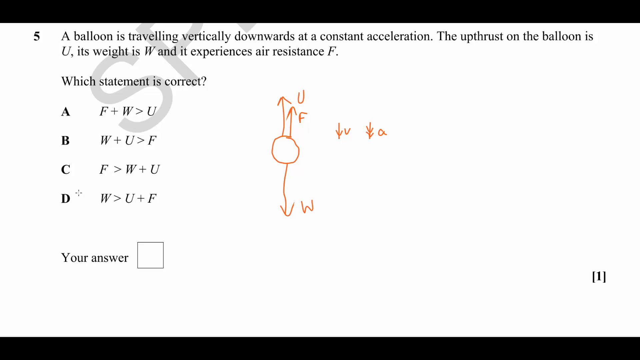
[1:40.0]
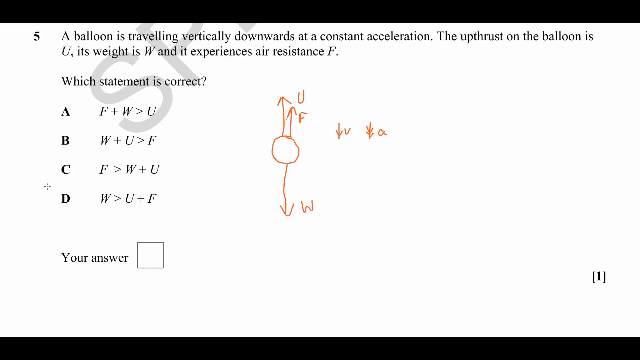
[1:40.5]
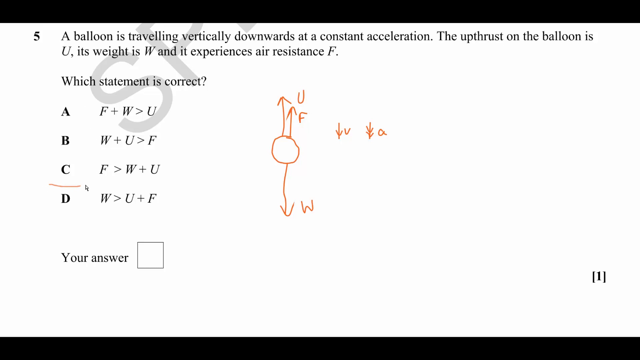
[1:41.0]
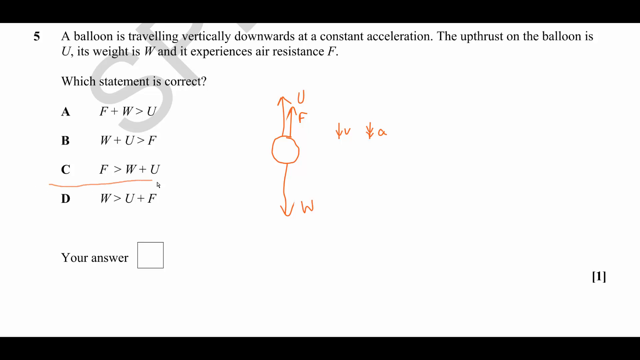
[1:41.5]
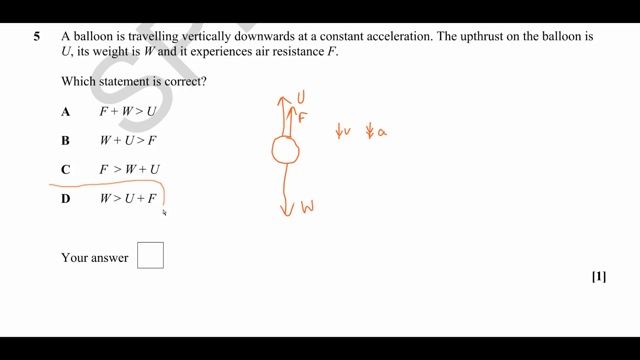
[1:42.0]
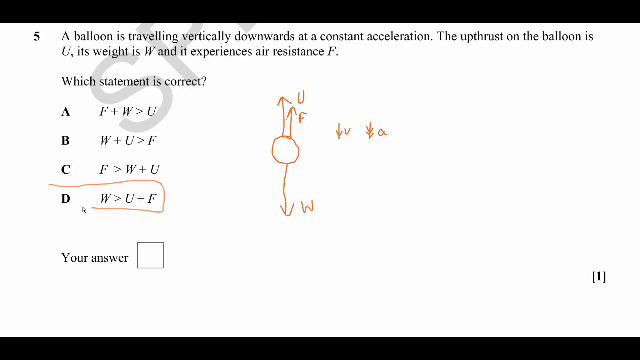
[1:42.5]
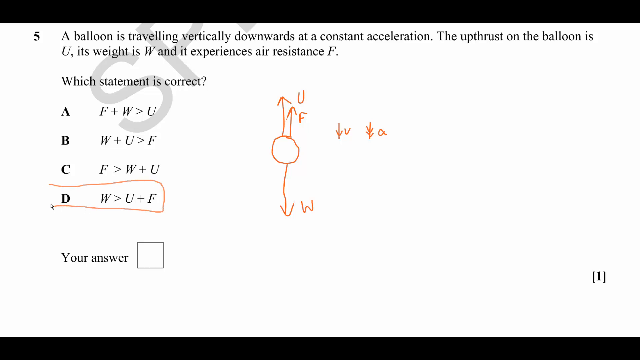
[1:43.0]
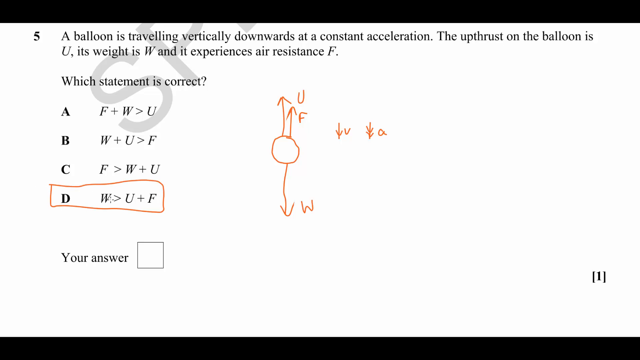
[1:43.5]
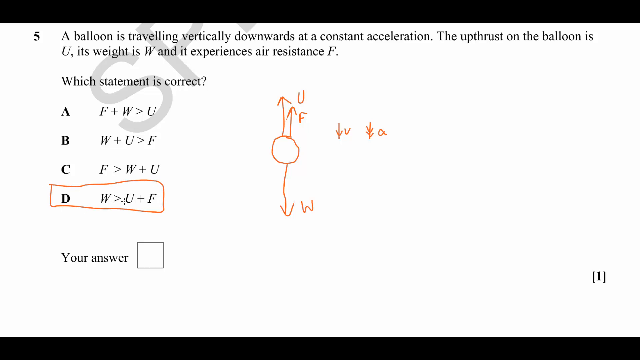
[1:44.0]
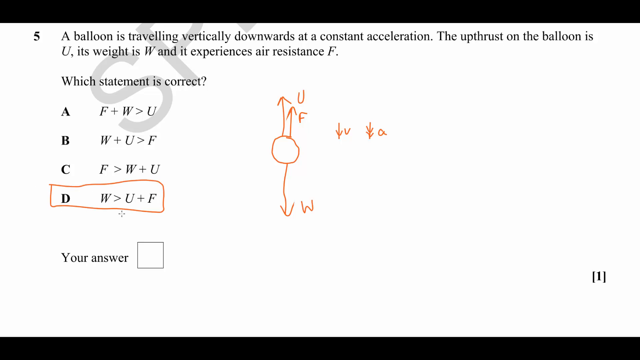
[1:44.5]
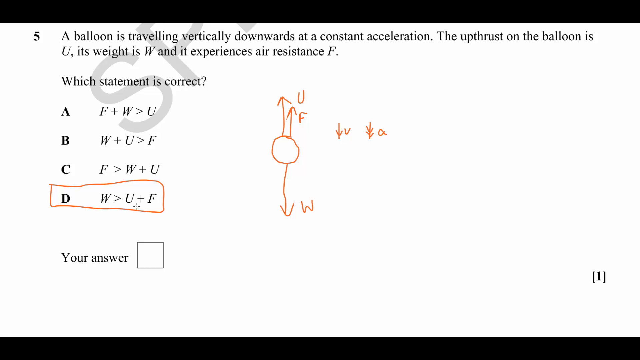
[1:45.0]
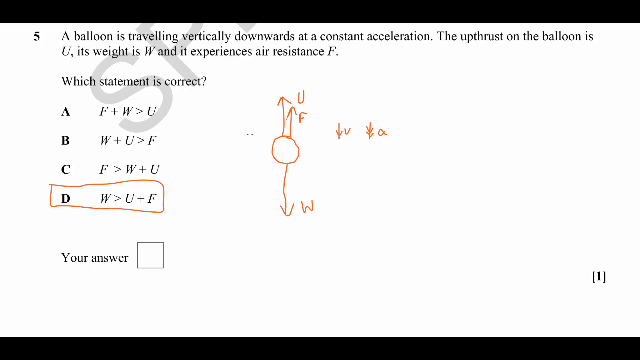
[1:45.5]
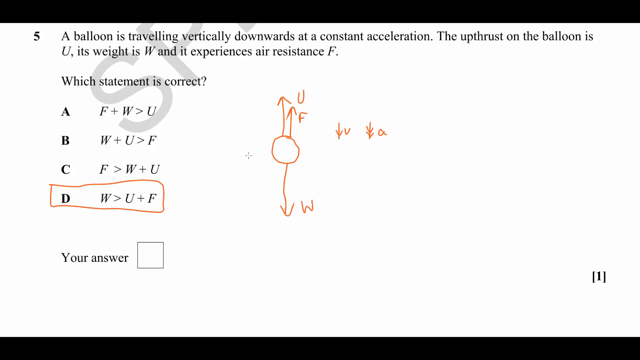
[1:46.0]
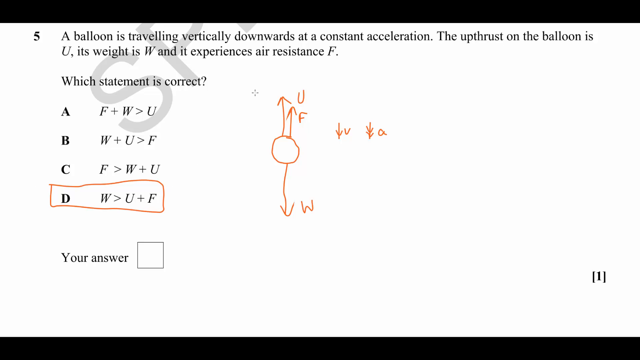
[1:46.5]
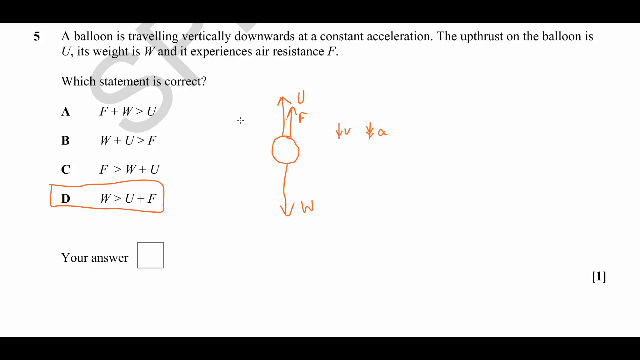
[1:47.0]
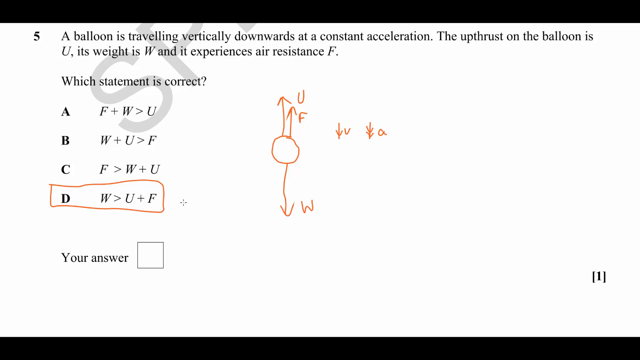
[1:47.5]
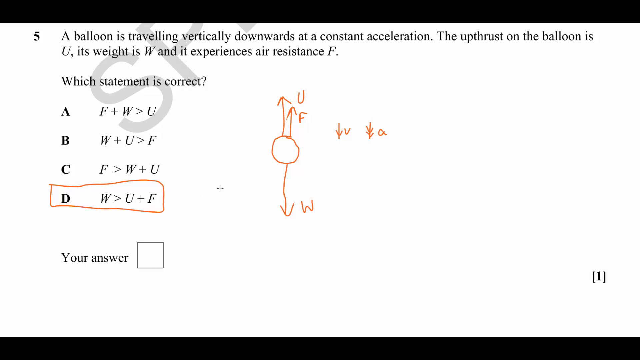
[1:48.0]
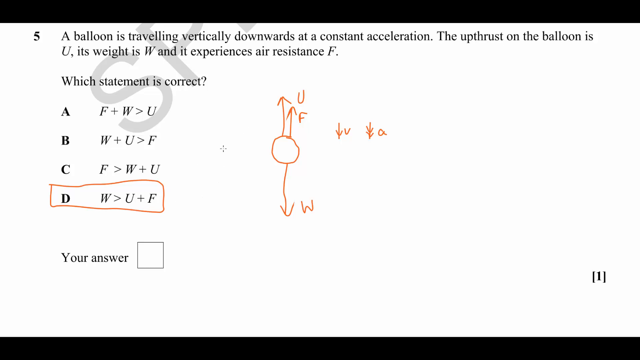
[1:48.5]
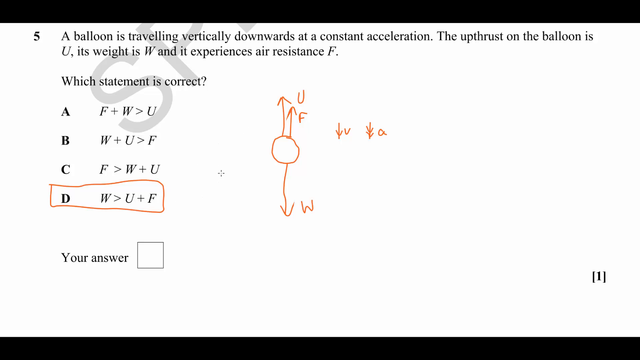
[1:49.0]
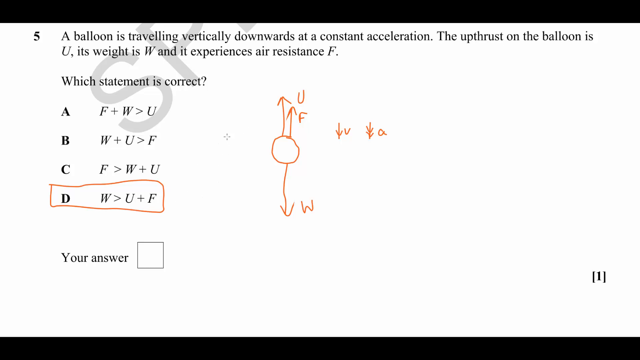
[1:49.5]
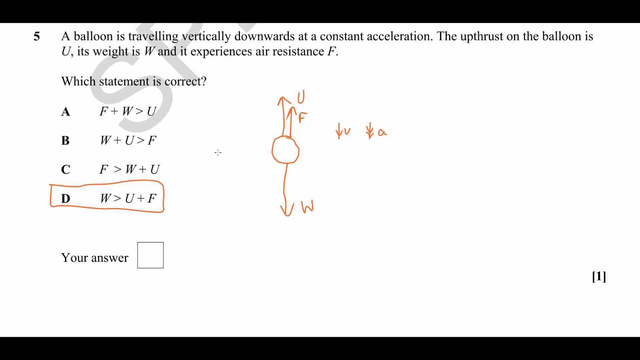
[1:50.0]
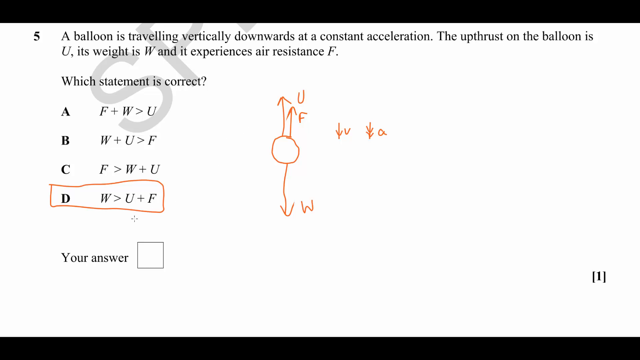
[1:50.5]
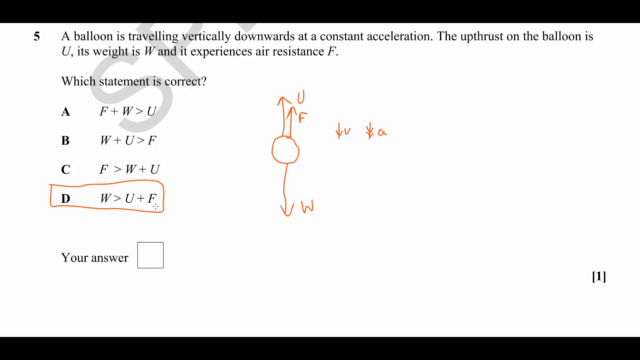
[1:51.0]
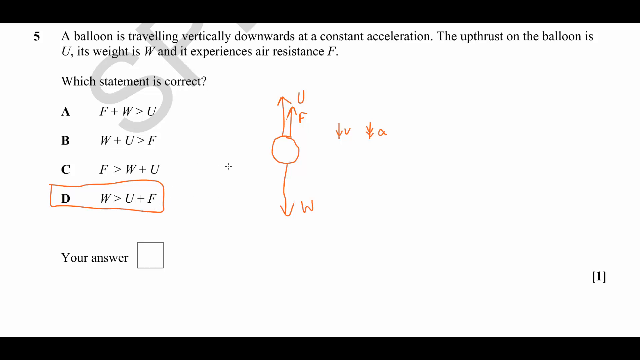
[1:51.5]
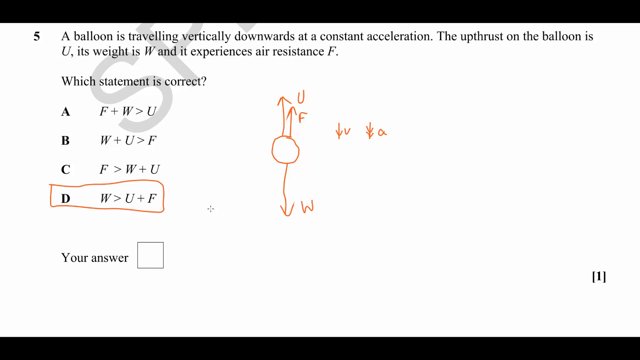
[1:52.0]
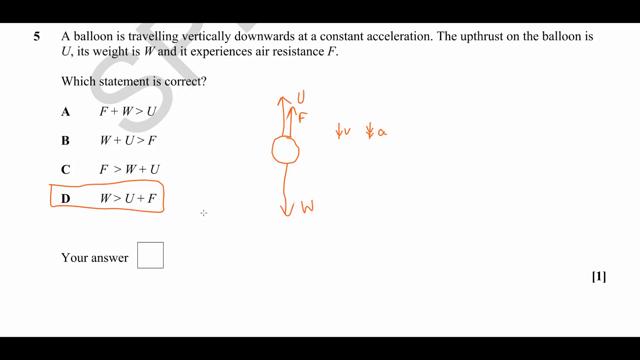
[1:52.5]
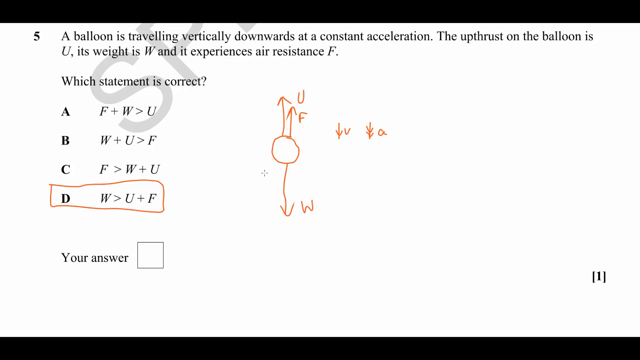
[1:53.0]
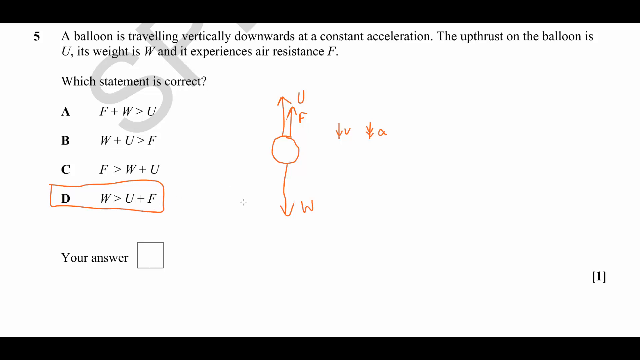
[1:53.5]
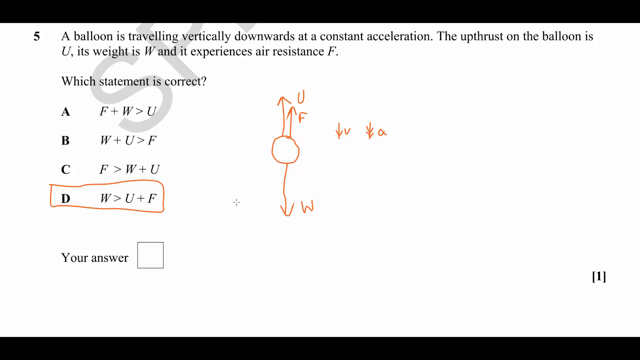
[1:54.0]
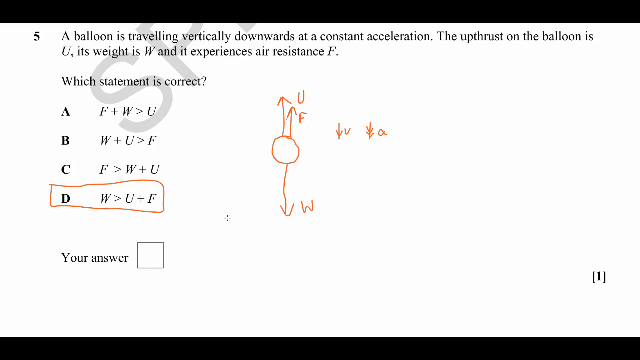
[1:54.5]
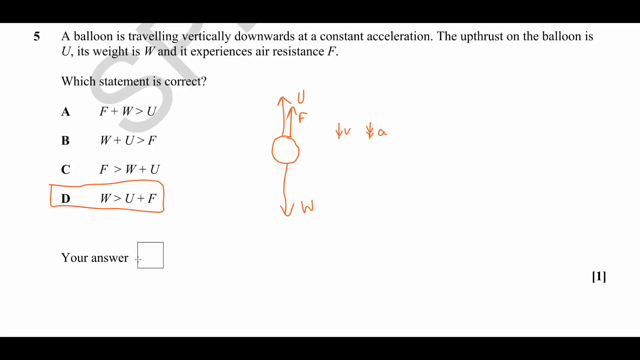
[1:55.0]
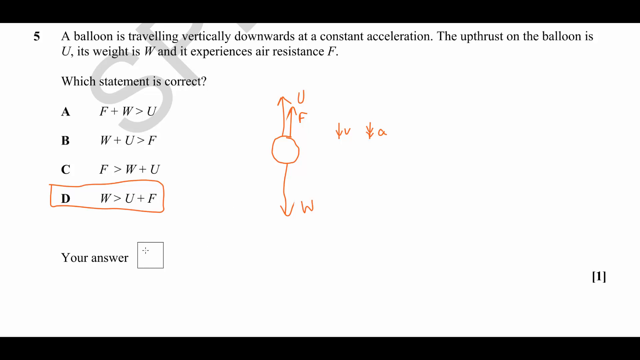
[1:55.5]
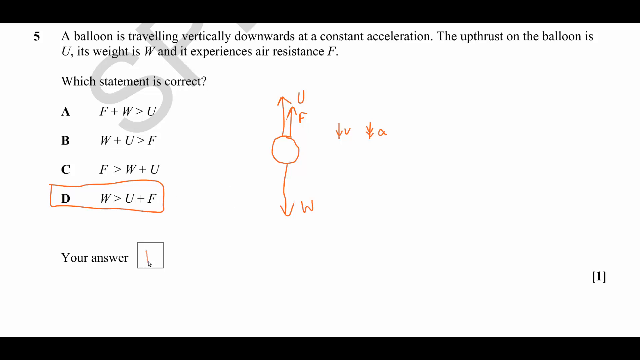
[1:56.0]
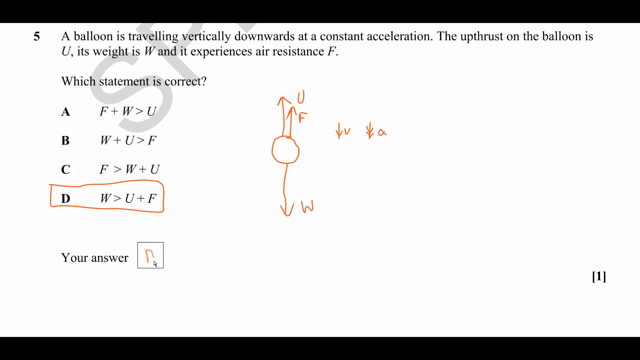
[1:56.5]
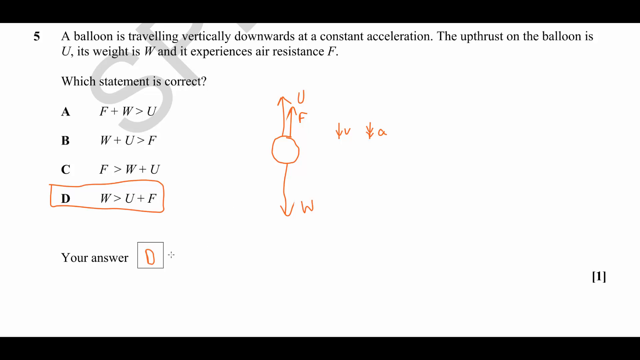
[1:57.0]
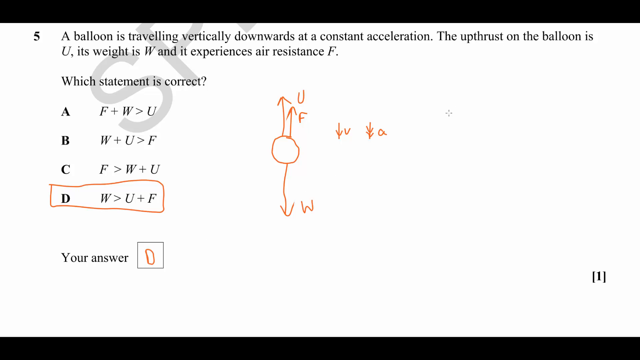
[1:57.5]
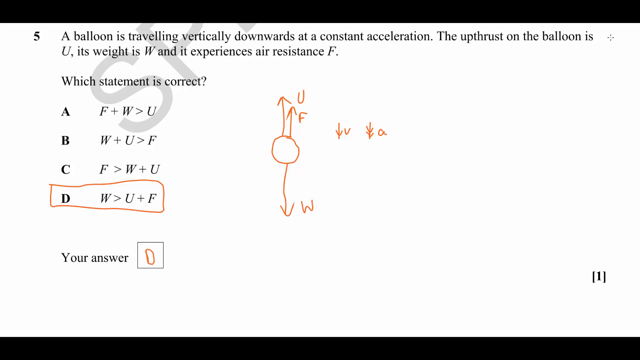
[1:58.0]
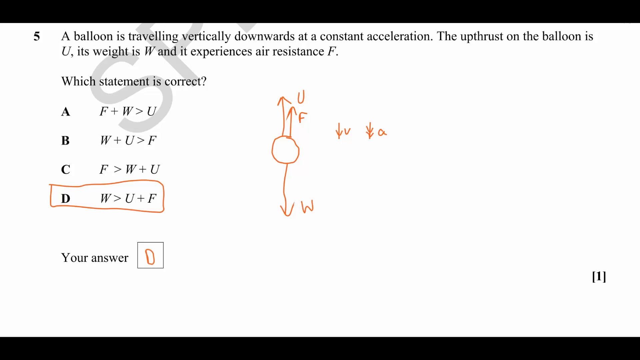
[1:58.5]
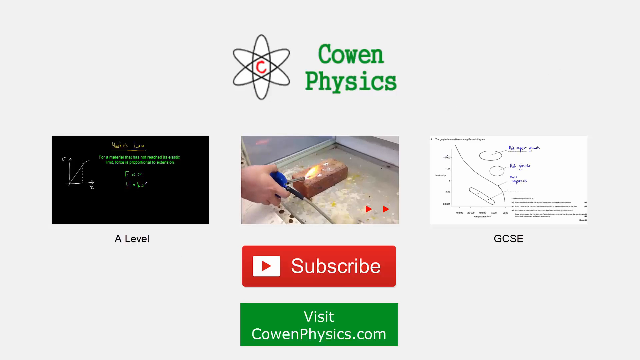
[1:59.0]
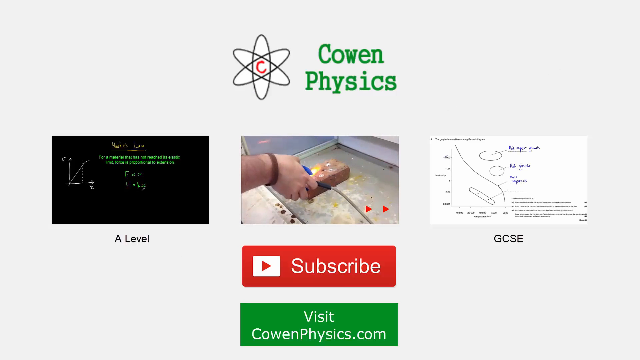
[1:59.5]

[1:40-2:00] The question appears on a white background, asking about a balloon traveling vertically downwards, providing three constants and asking for the relation between them. Beside it is the drawn circle with two arrows pointing up and one arrow pointing down, each labeled. The cursor draws an orange box around option D, which is "W > U + F". The cursor moves around and toward the diagram, as if to show why this is the correct answer. D is filled in as the answer in the answer box. The page then changes, and the question disappears to show a title that says "Cowen Physics". Other videos, a subscribe button, and a website link remain on screen.